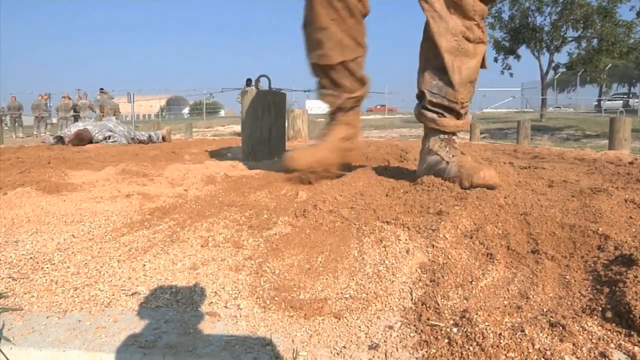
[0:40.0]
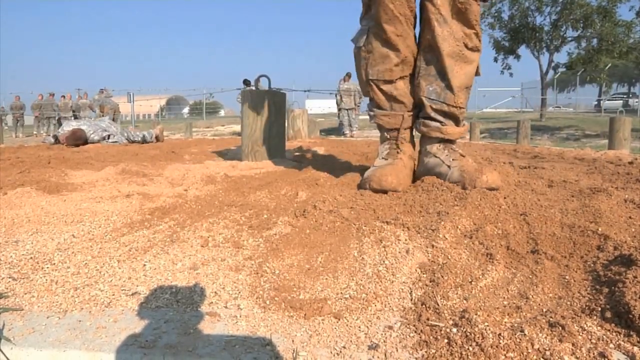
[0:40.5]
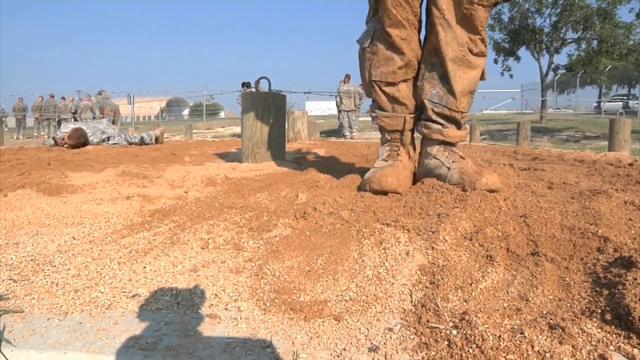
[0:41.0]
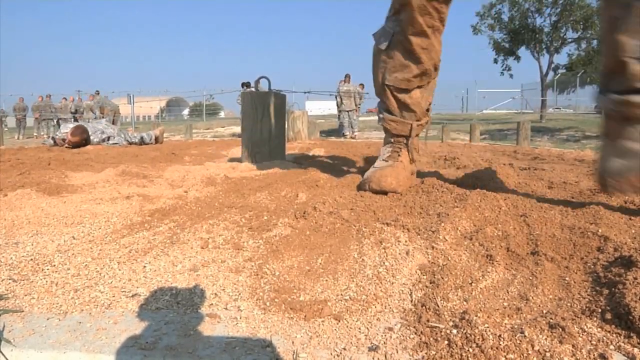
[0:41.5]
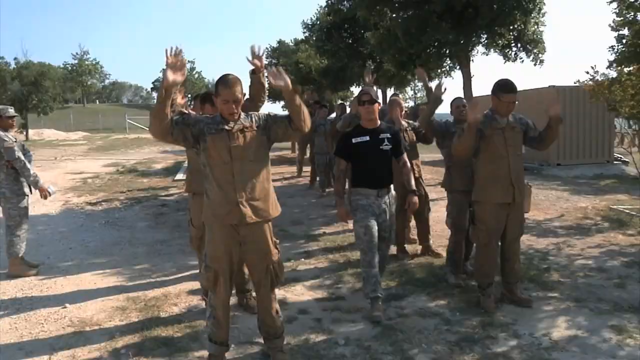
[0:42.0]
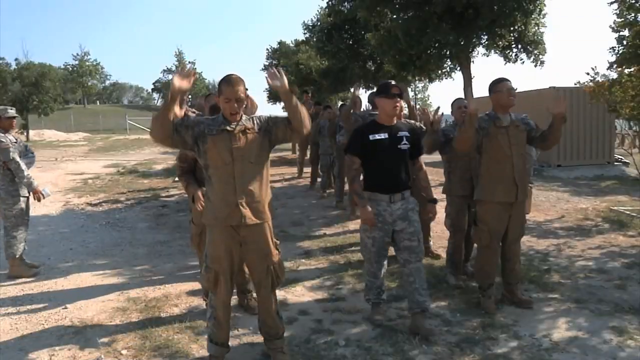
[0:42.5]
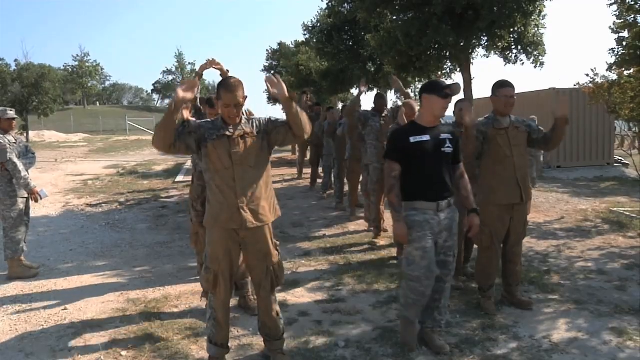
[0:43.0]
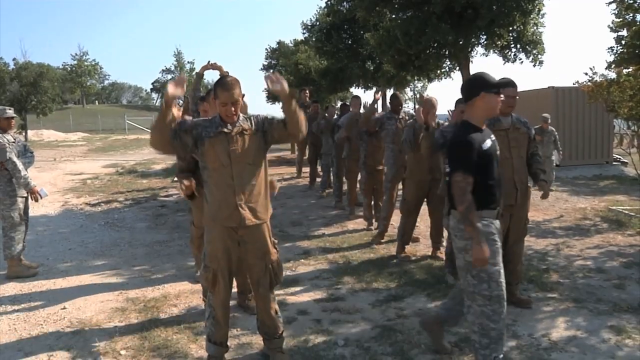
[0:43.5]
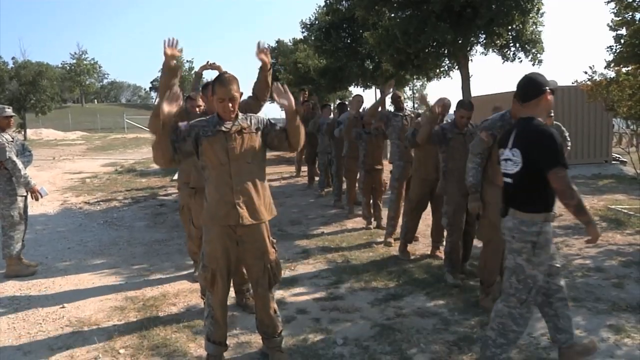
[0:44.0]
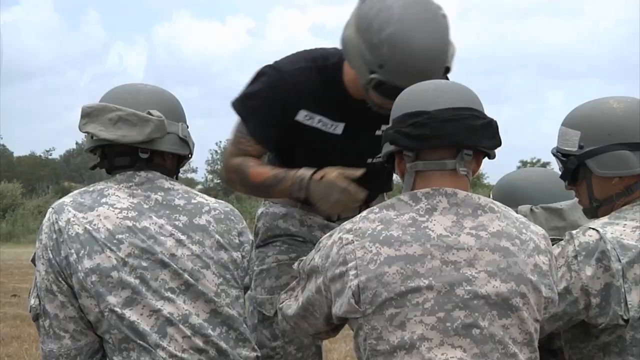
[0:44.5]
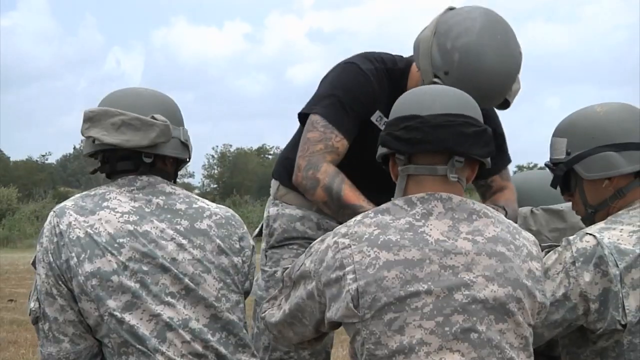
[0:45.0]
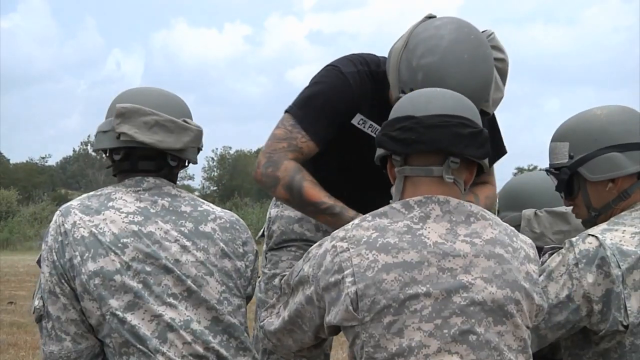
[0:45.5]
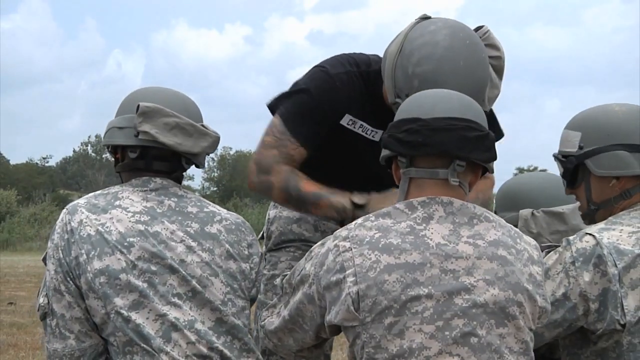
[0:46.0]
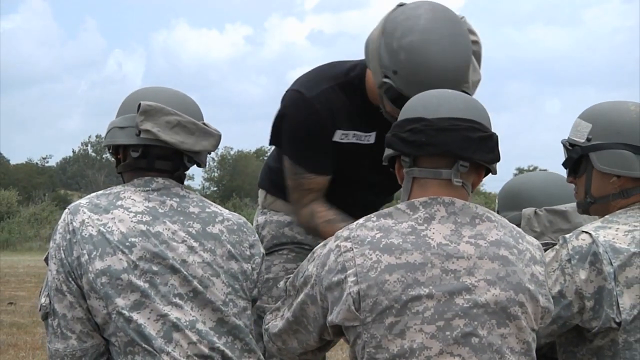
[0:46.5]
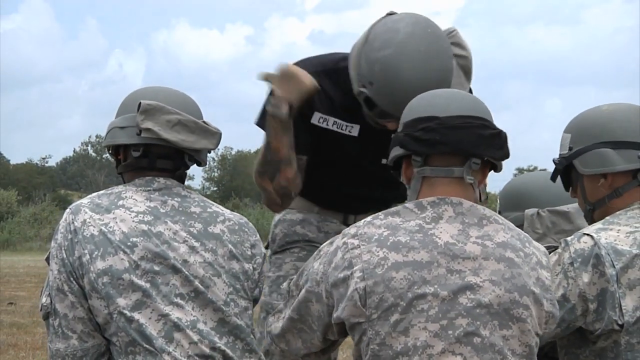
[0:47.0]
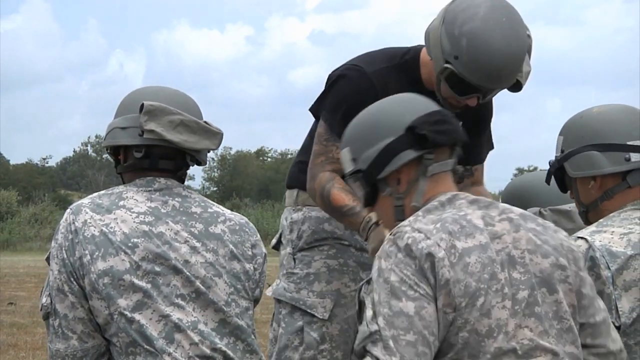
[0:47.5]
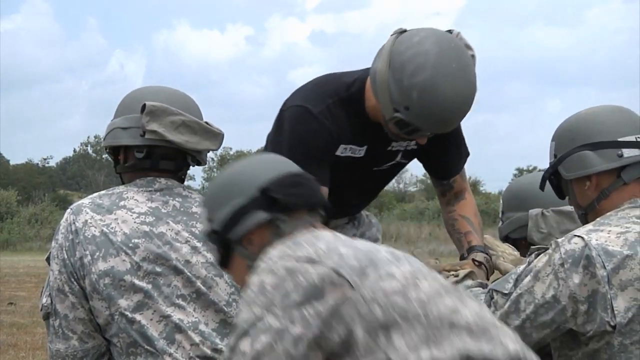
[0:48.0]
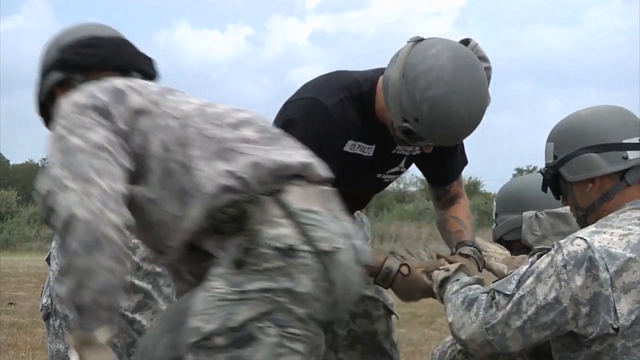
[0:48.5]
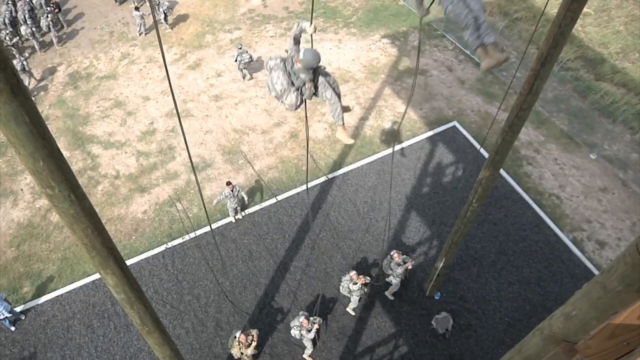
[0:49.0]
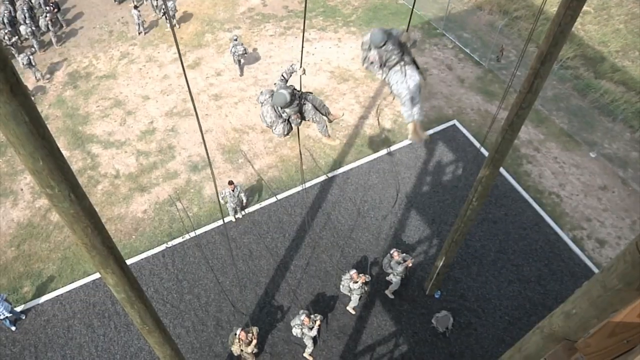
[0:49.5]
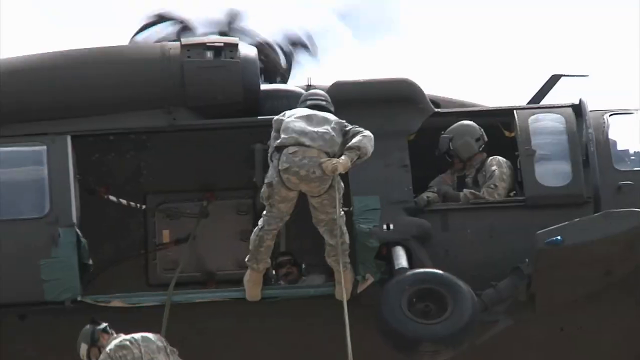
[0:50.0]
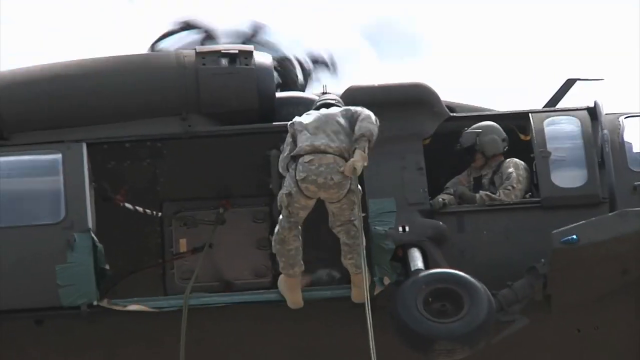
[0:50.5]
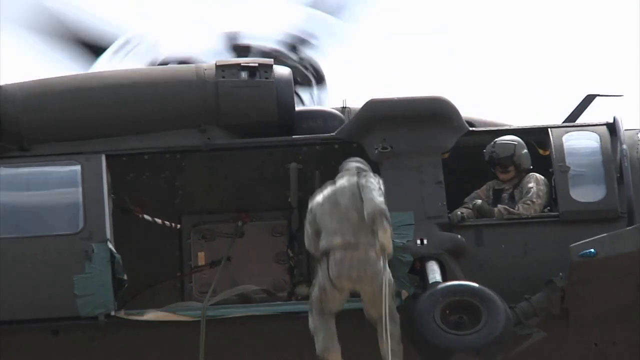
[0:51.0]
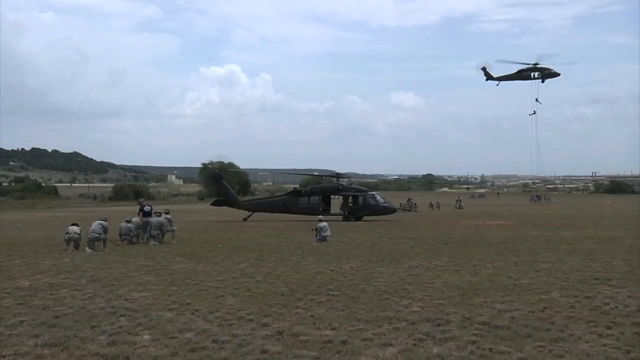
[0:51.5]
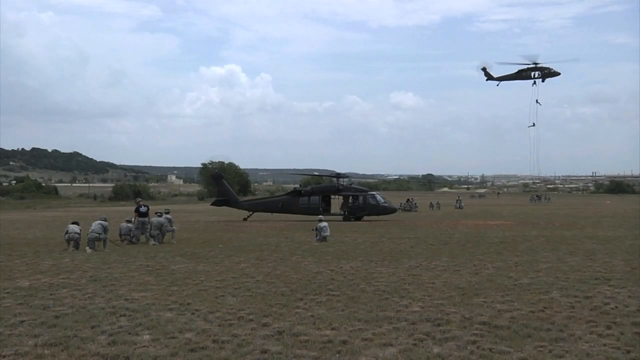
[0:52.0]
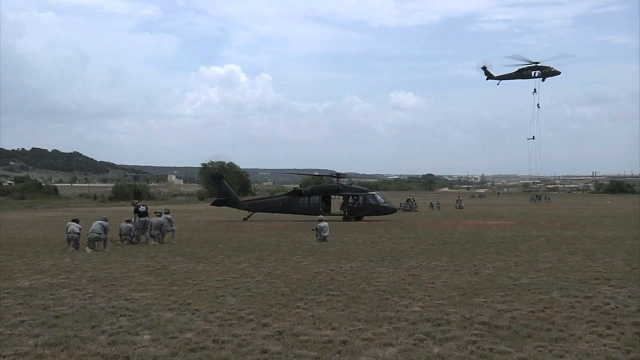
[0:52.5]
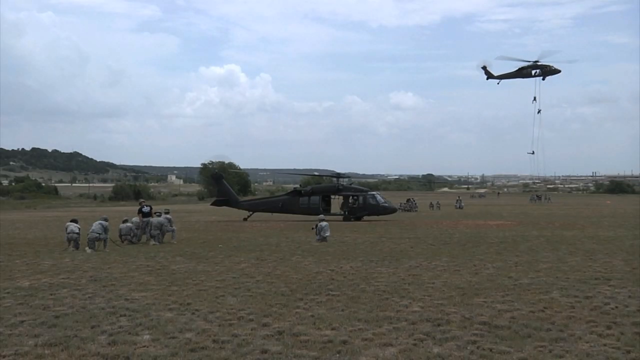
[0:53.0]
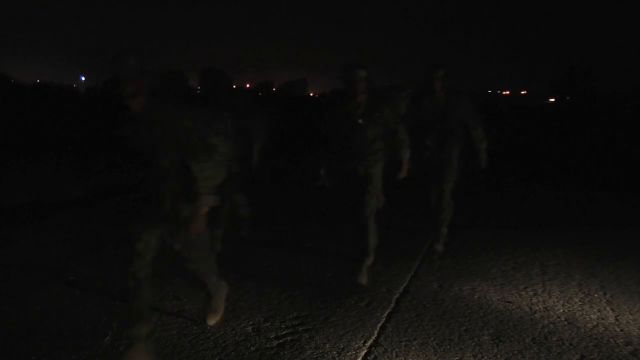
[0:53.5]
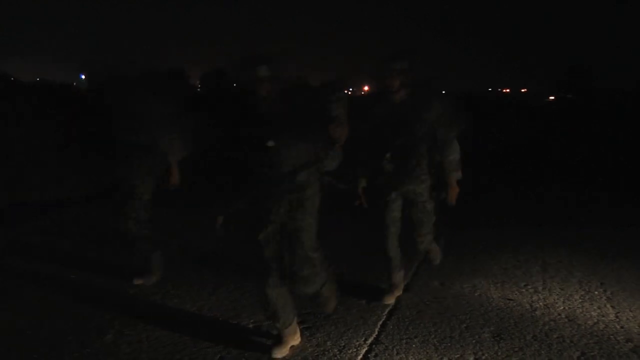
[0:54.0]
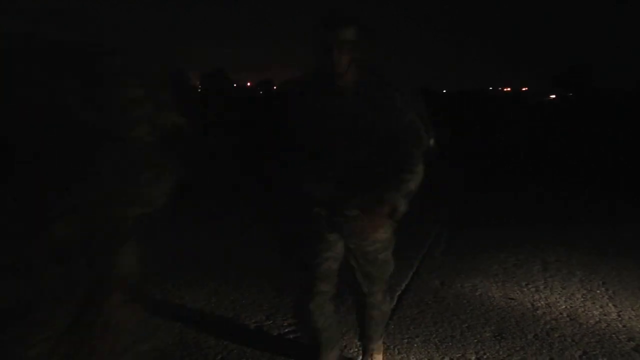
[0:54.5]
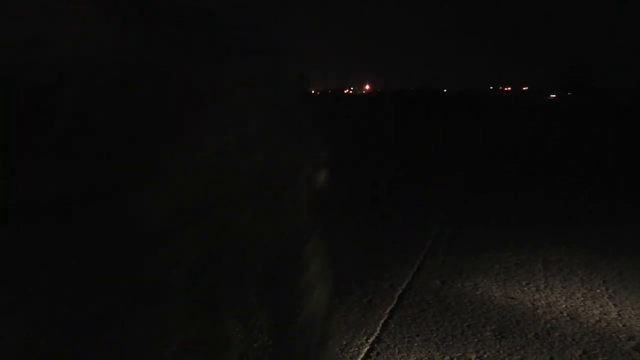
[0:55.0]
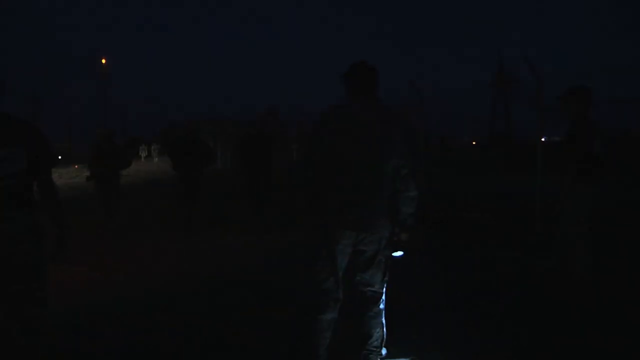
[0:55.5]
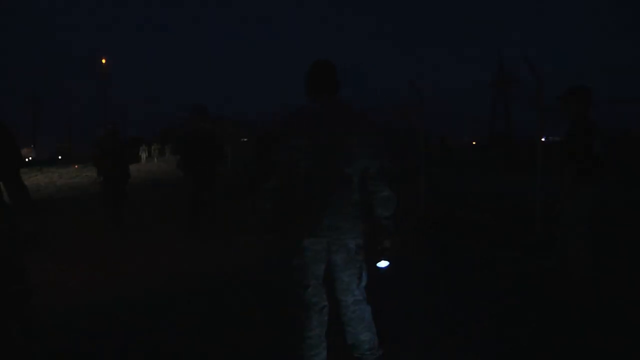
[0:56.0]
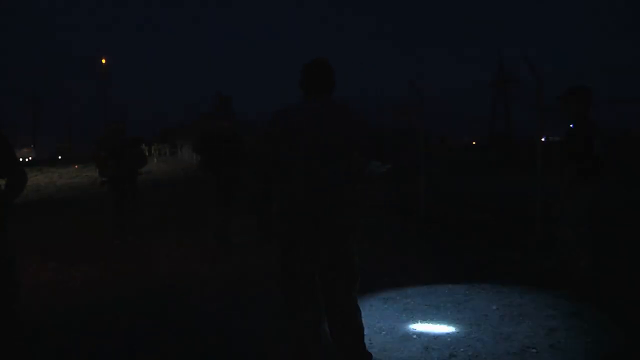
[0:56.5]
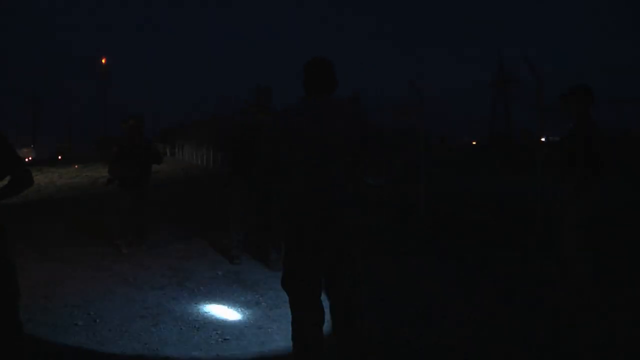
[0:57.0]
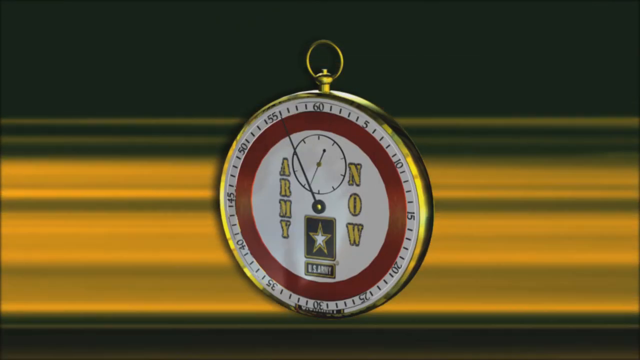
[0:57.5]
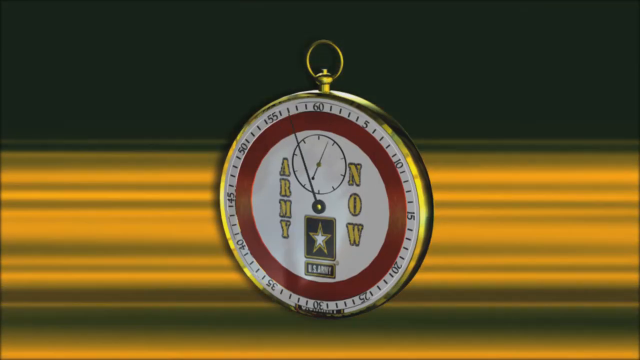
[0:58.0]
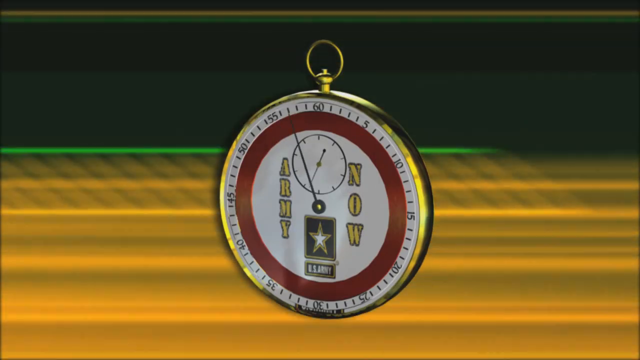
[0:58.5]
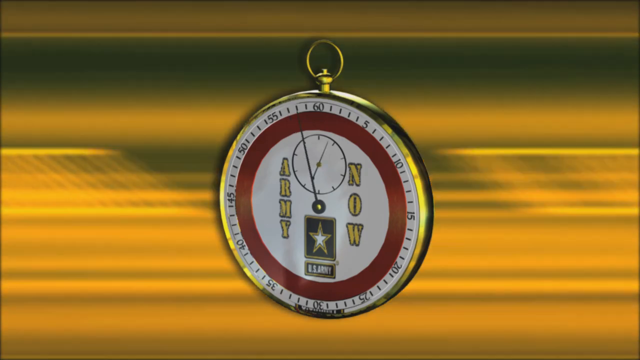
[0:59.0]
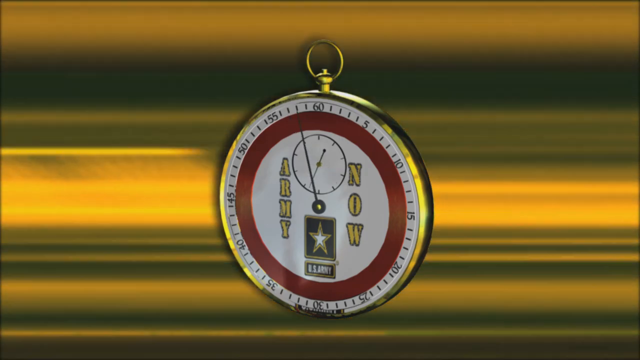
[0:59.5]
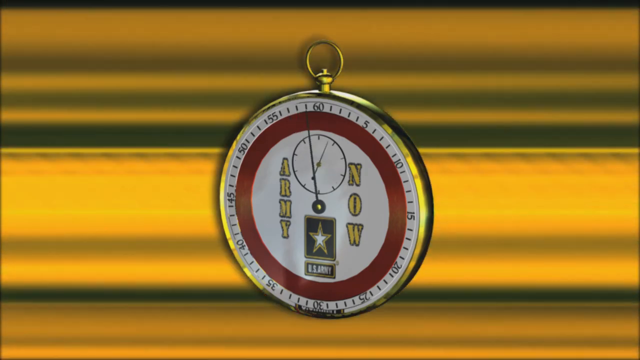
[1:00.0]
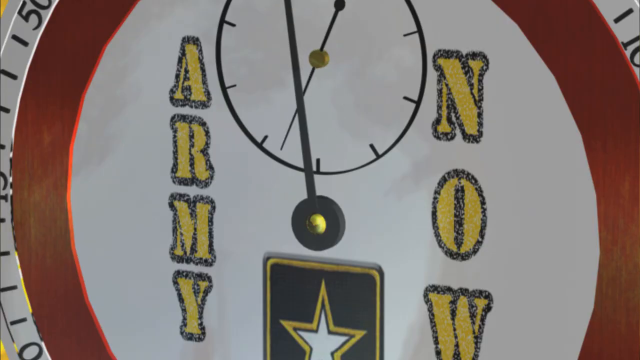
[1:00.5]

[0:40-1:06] A soldier's two boots stand in the dirt, while a soldier lies on the ground in the background practicing low-crawling. The soldier's left foot is on the ground, and he brings both heels together before exiting the right side of the screen. Next, a group of soldiers practices some sort of exercise: standing in two rows, they lift both hands above their heads repeatedly while an instructor walks between them. Then soldiers stand with their backs turned to the camera as an instructor goes through each one's equipment, presumably to ensure it is correct. A top-down view shows three ropes coming down from very high up in the air, with soldiers practicing rappelling down them. A quick cut shows a soldier rappelling out of an actual helicopter. Next, a helicopter is in the distance, and at least three soldiers are rappelling from it. A helicopter is landed in the middle of a field, with a group of soldiers standing in the field near it. Then a group of soldiers moves through the darkness, some with flashlights. Finally, the video cuts to a 3D image of a compass with the words "Army Now" and the Army insignia on it, with animated speed lines moving behind it. It quickly zooms in twice to show a closer view of the compass.